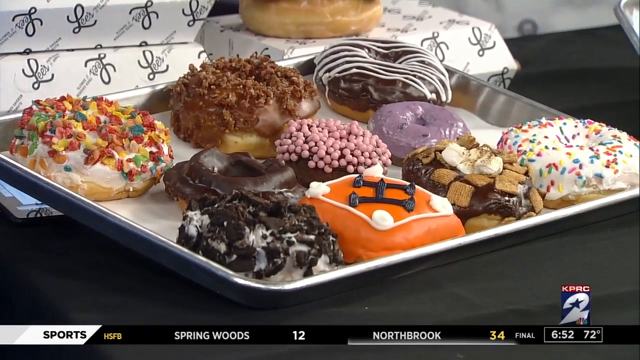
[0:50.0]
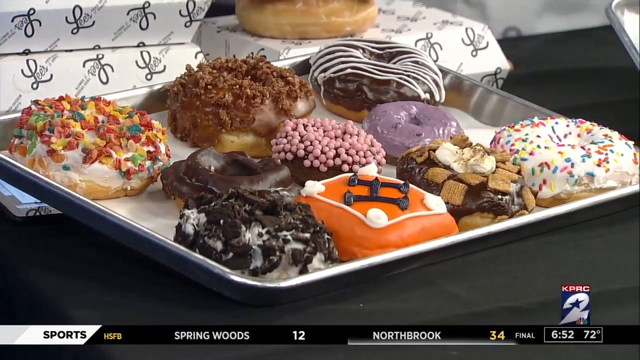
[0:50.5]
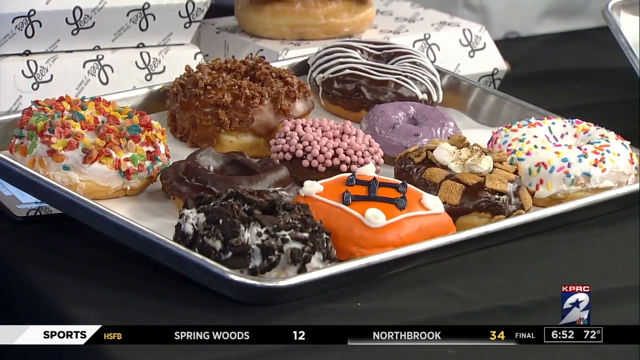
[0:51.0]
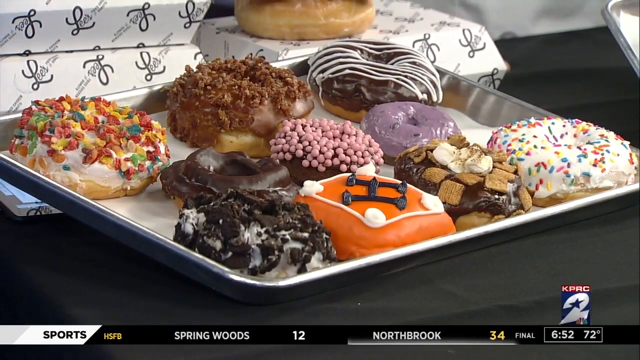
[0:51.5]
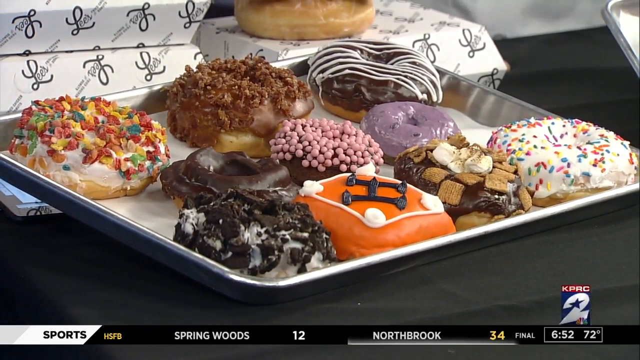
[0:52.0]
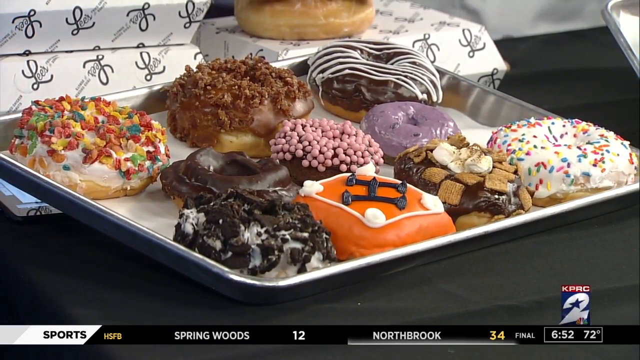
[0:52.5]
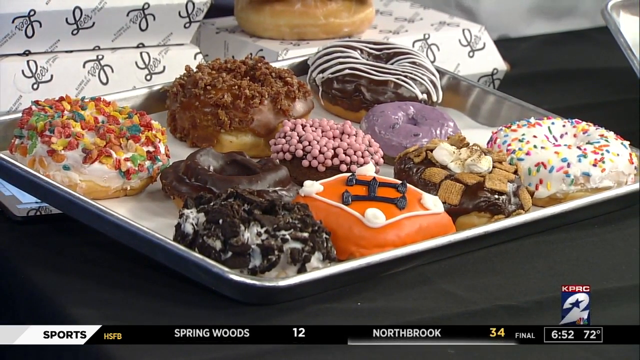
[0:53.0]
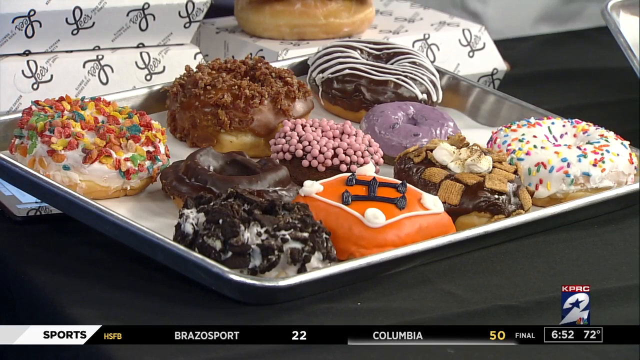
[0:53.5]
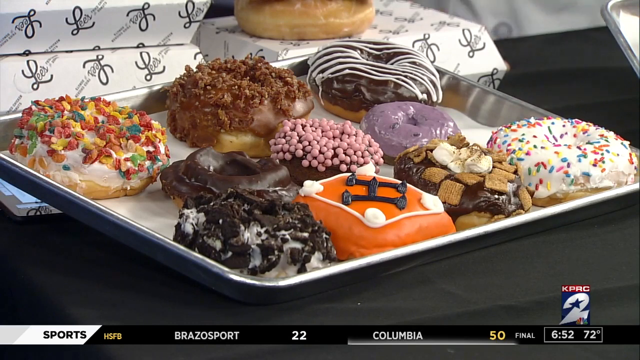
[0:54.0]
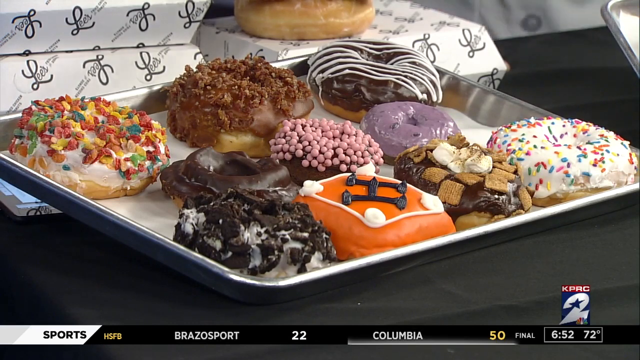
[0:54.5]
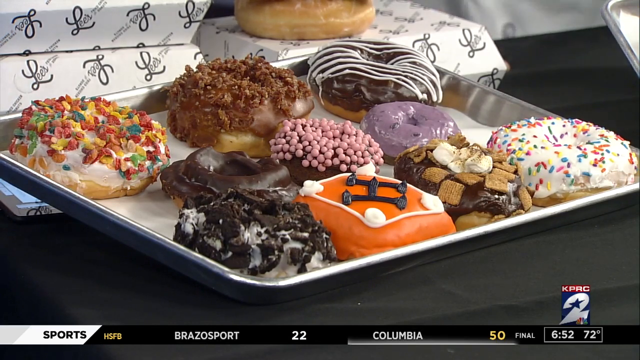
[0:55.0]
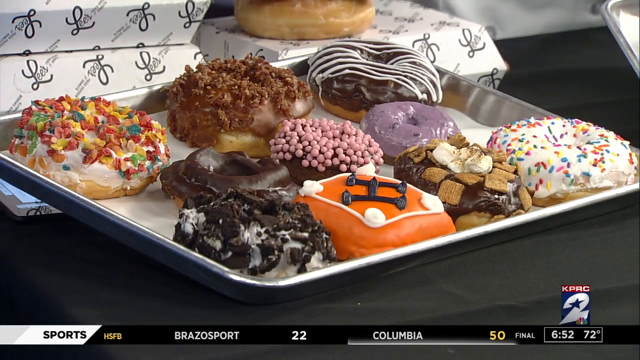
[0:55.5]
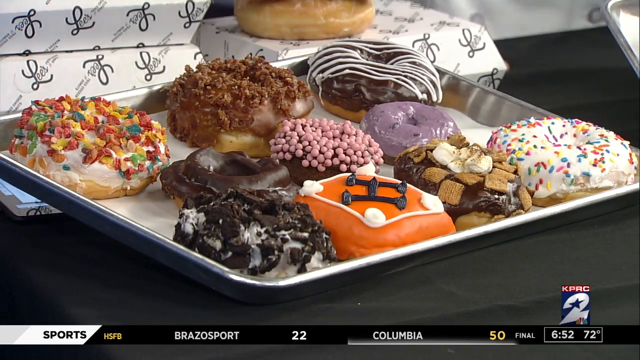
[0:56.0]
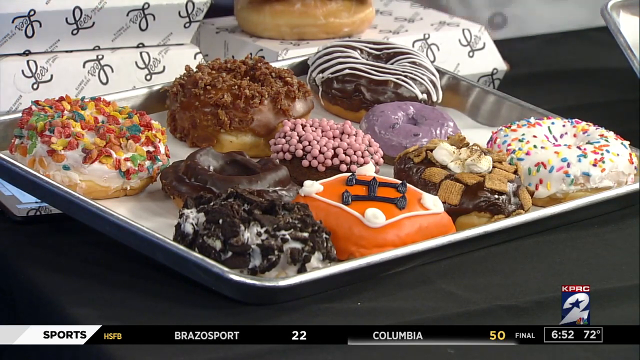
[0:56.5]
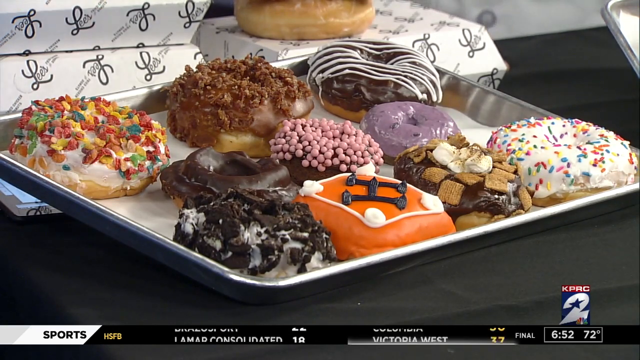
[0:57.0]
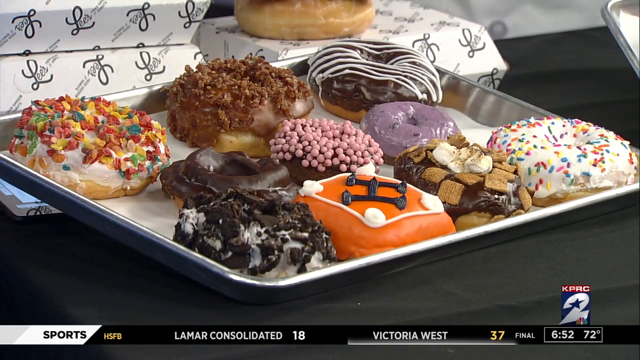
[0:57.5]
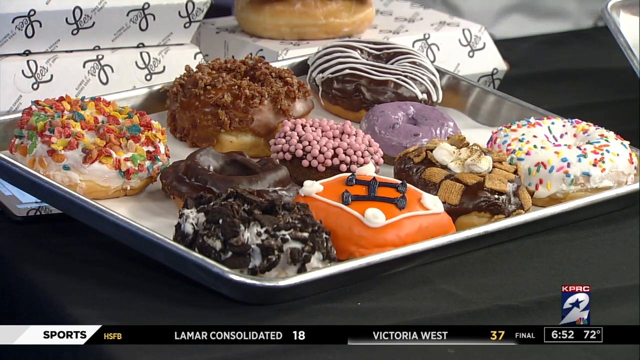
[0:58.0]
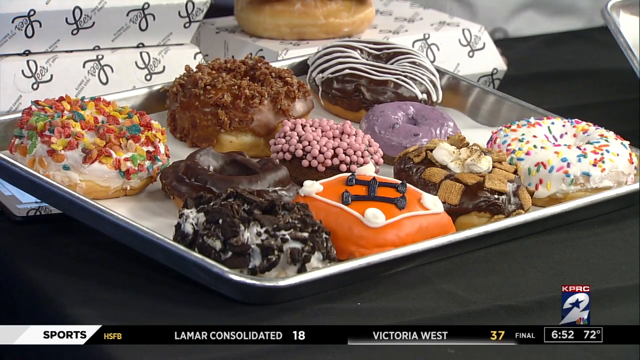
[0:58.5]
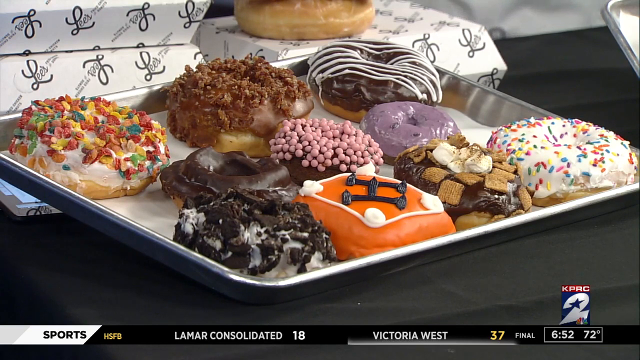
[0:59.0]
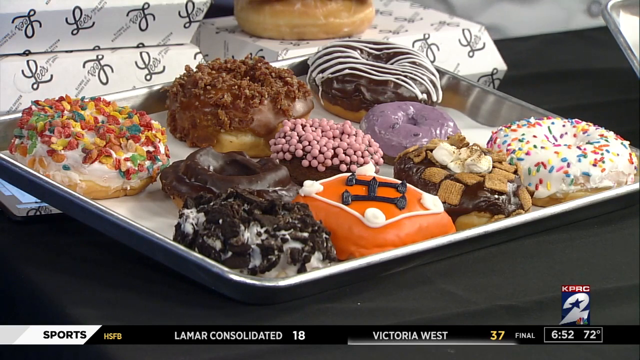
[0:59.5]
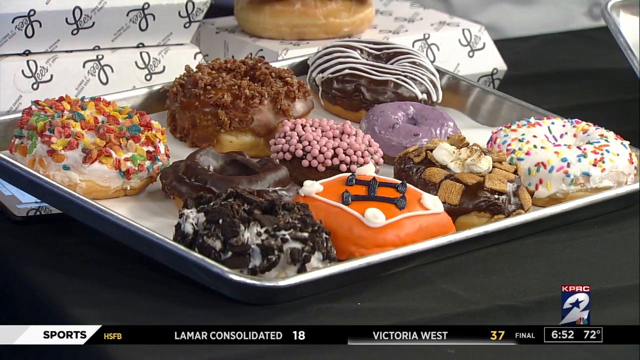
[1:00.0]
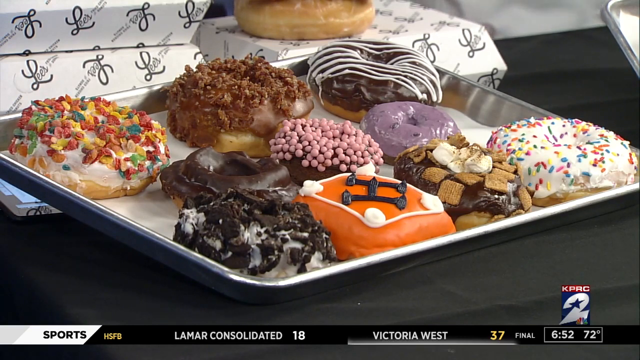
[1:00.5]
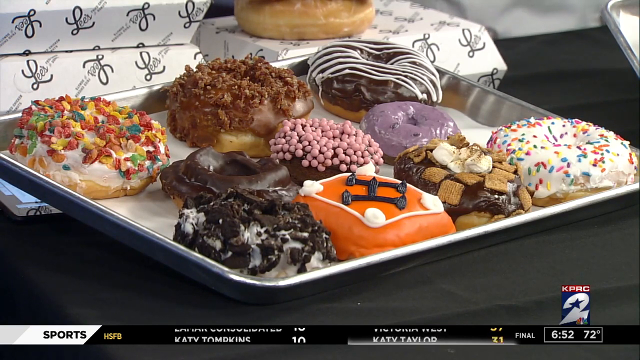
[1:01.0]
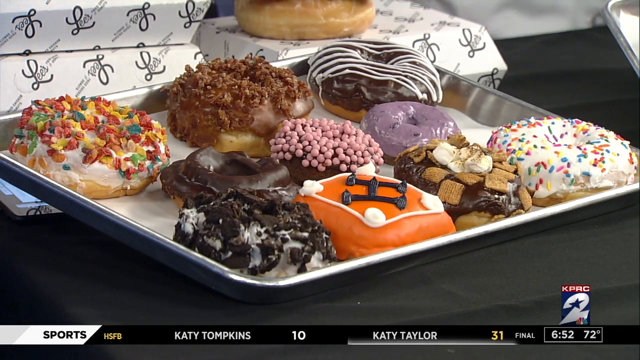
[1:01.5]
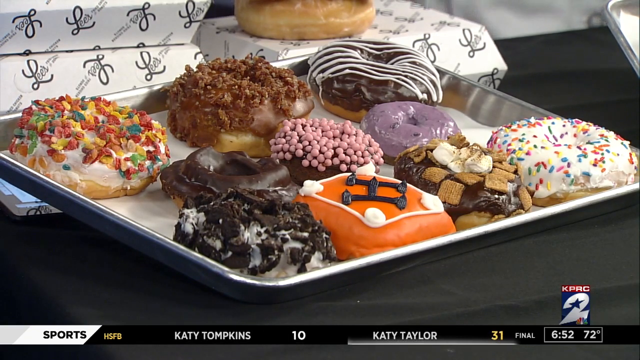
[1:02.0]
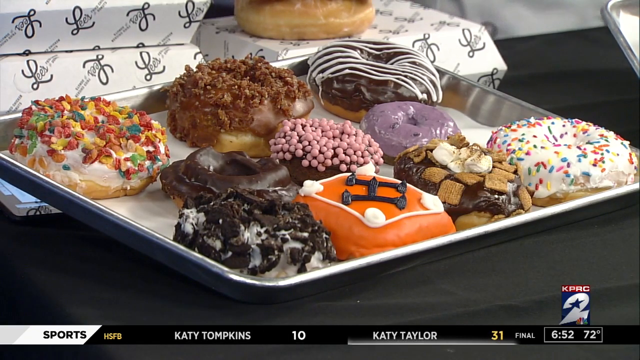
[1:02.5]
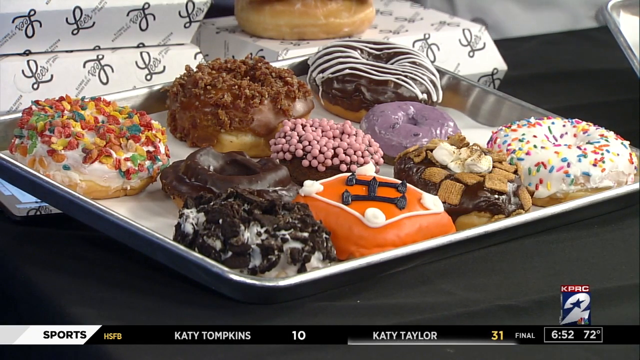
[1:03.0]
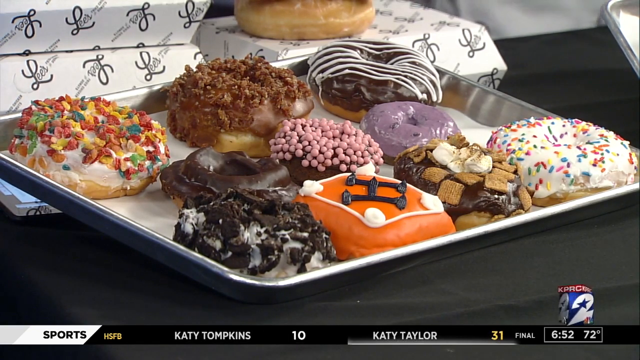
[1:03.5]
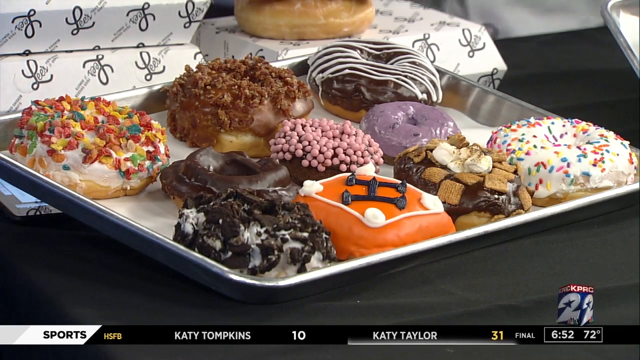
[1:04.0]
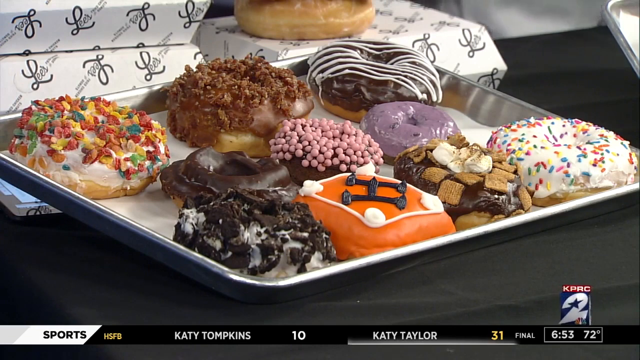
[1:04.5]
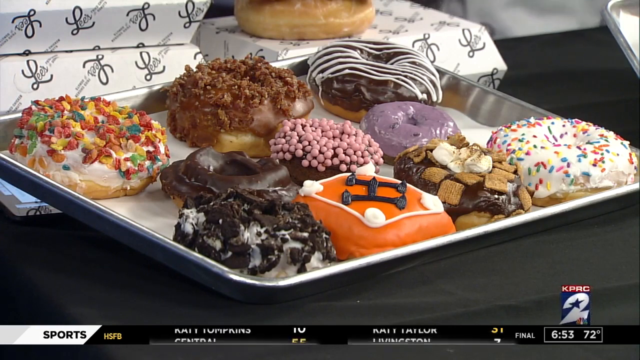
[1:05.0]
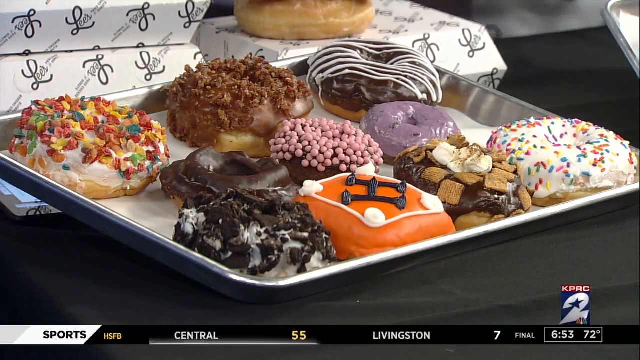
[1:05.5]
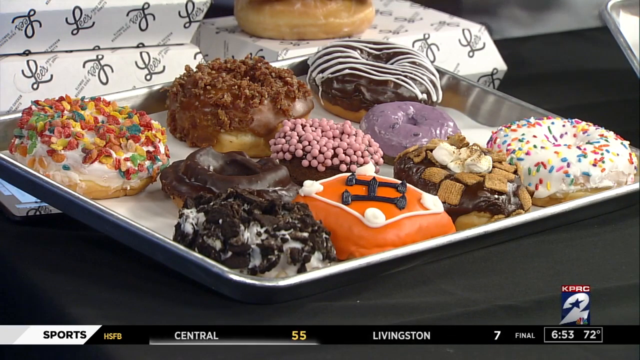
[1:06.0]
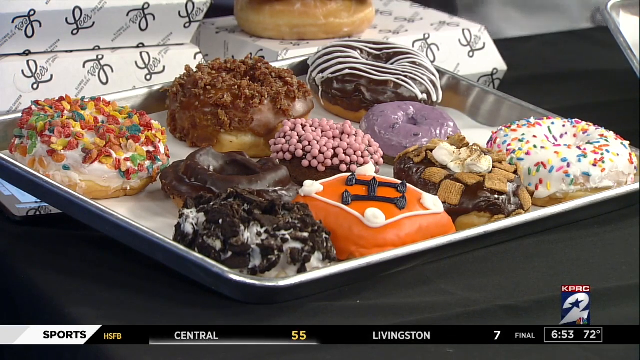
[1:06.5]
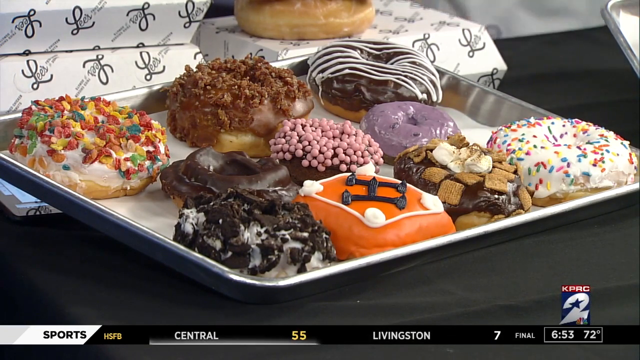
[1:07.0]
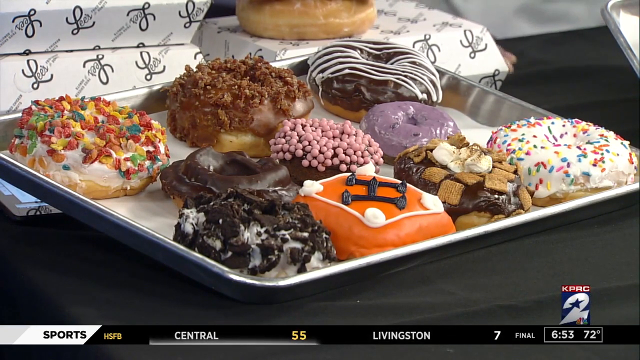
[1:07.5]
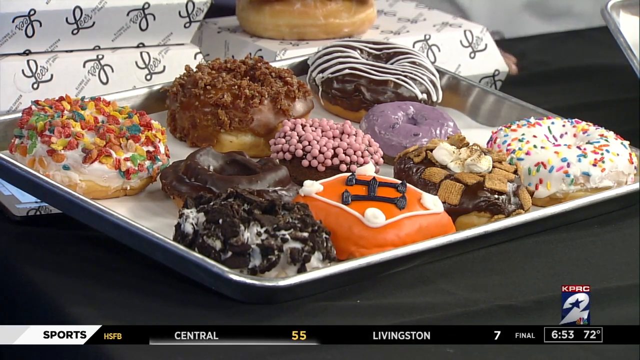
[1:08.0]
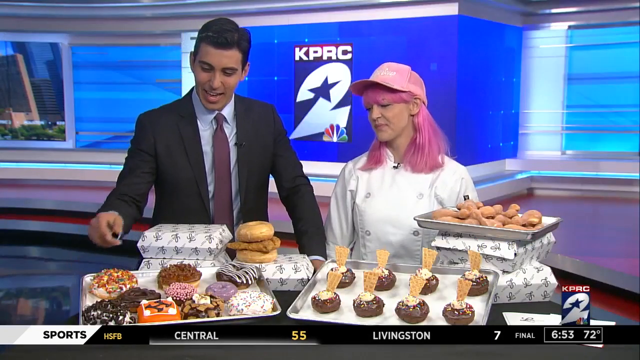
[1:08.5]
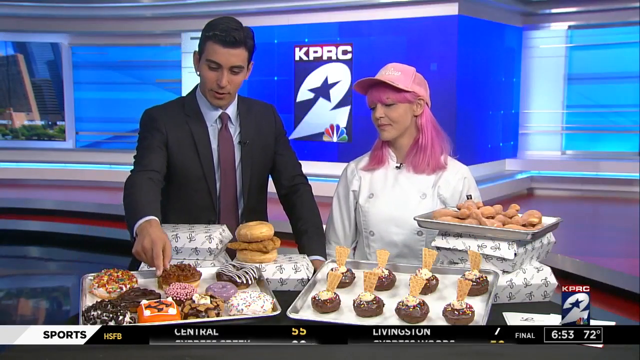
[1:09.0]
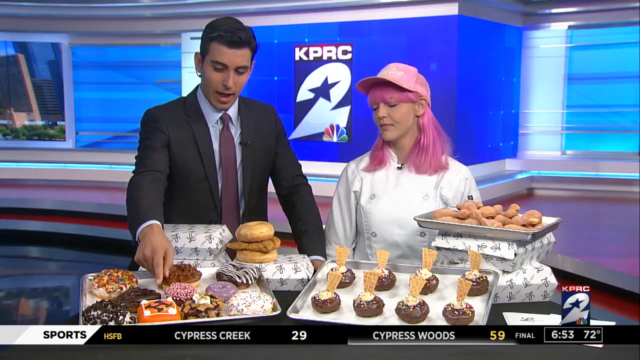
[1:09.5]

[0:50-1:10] A female chef presents donuts on the KPRC2 talk show. The donuts have different designs with different toppings on top, and the two point at the donuts as they talk. Images of the donuts are shown, each with a different design. There are also packets in which she puts the donuts when selling them. The two nod their heads as she explains.